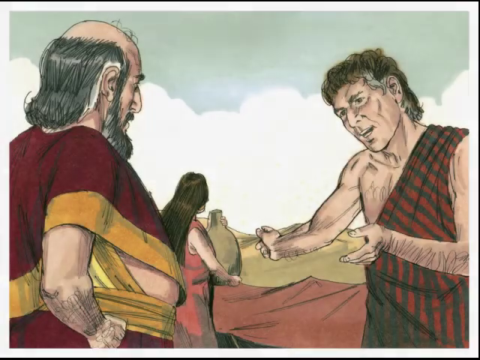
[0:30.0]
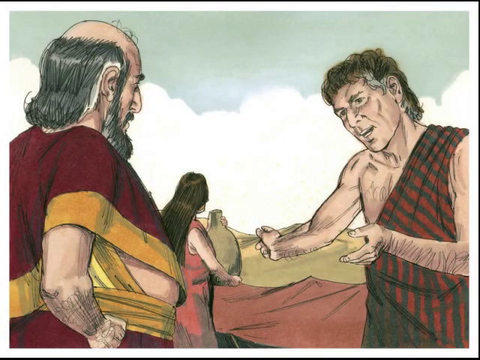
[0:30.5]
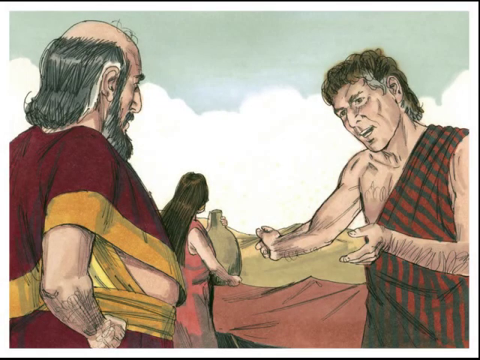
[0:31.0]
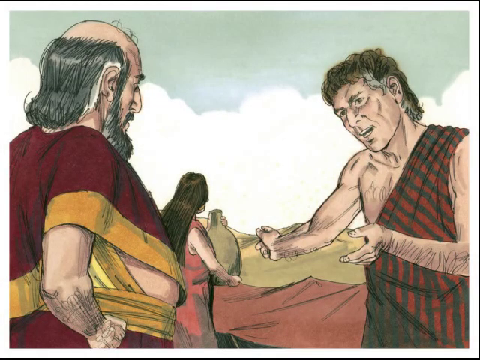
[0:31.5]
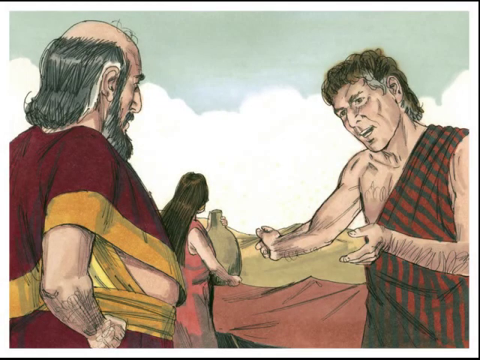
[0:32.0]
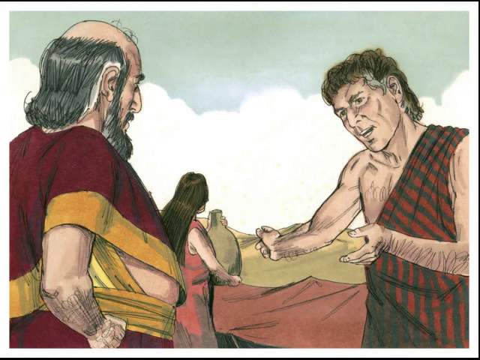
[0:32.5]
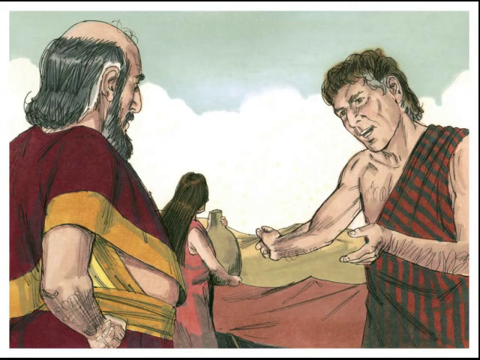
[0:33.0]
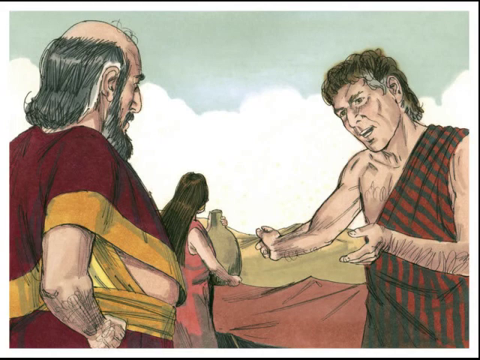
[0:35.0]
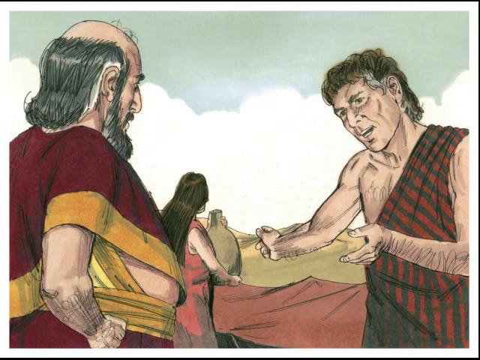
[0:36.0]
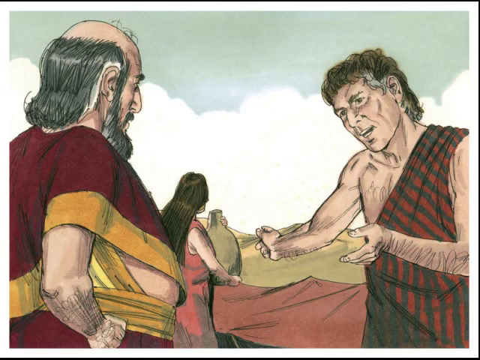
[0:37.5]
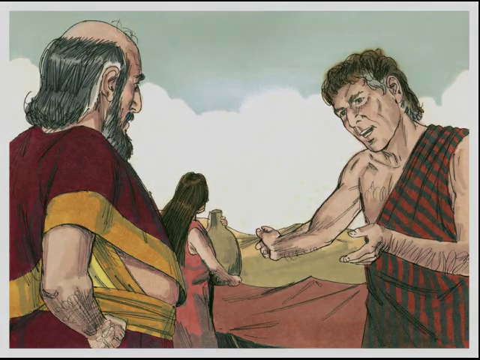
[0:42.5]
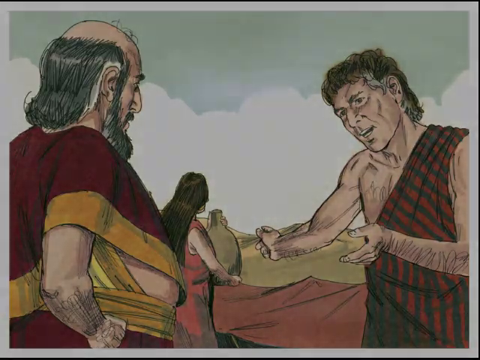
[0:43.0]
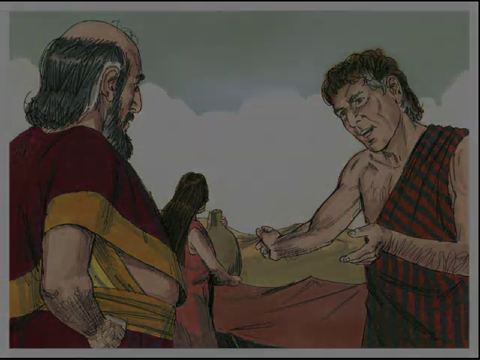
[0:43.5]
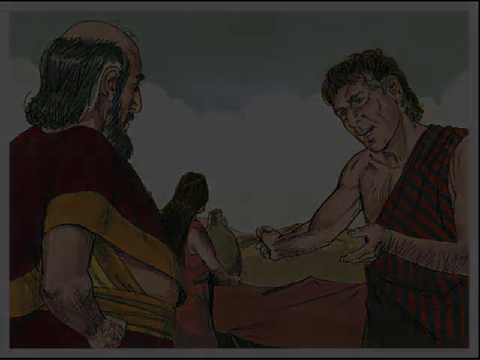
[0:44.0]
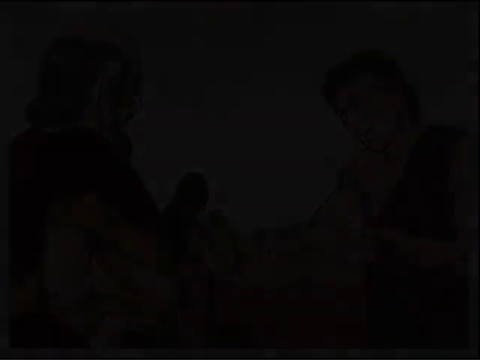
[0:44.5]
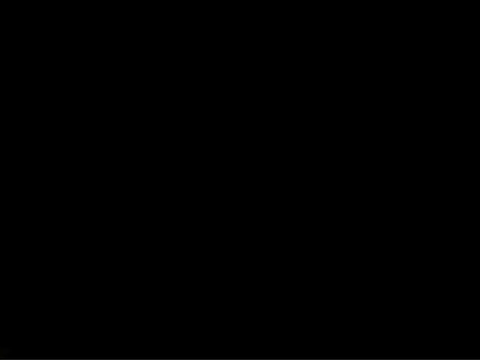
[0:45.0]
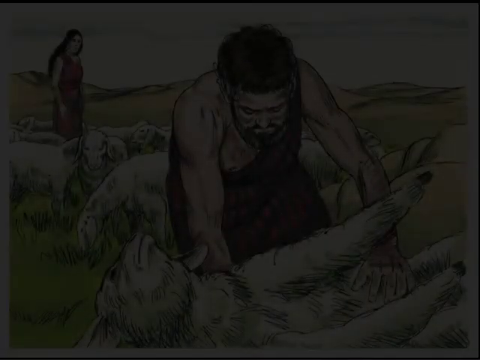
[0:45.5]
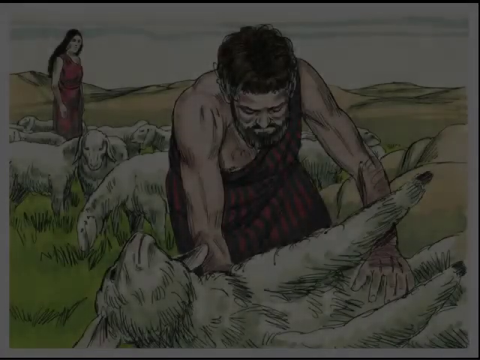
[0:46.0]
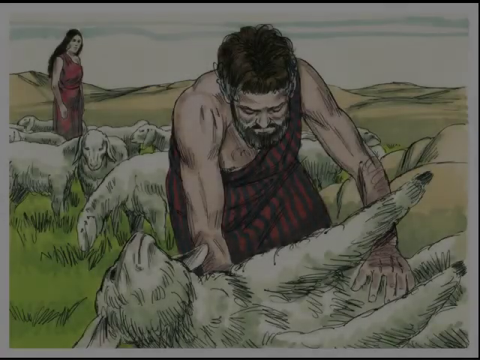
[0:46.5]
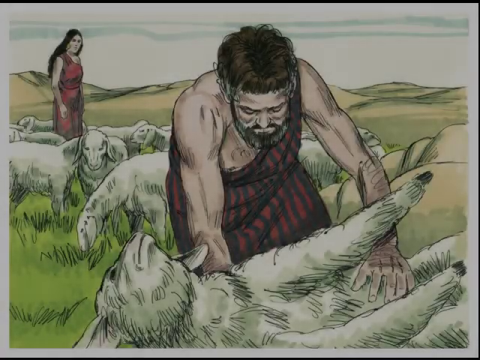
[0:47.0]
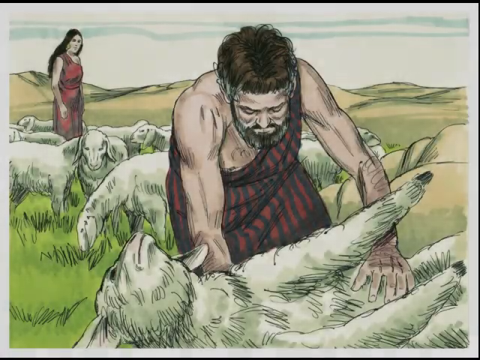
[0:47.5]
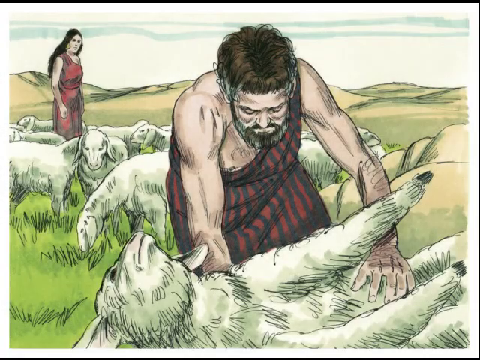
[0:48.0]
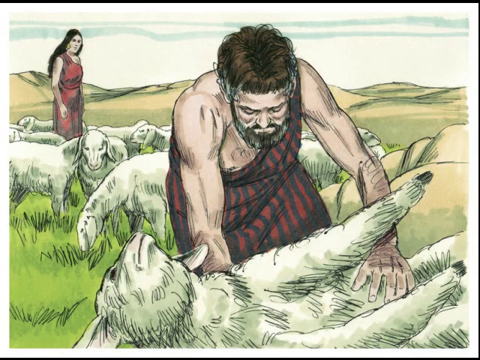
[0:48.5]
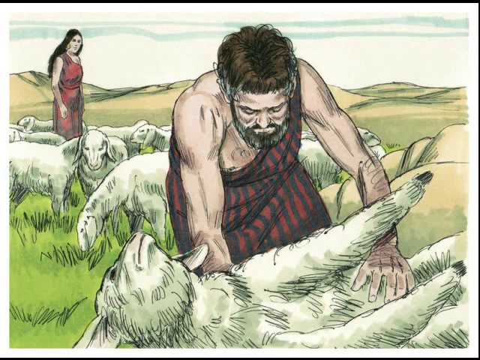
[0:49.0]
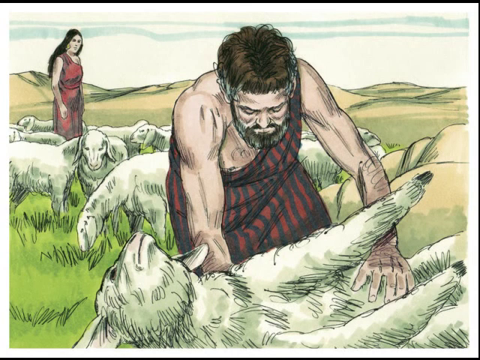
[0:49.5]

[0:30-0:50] A rendering shows the two men seen earlier, now standing outside in a field. The older man is on the left, mostly with his back to the viewer and seen in profile. The younger man, on the right, faces the older man, his face visible at almost full three-quarters. His arms are in front of him with his hands facing each other, his head tilted, and the muscles in his arms, neck and face tense; he gazes directly into the older man's eyes and seems to be trying to persuade him of something. The older man looks down rather than at the younger man, his posture suggesting he is listening closely and considering what is being said.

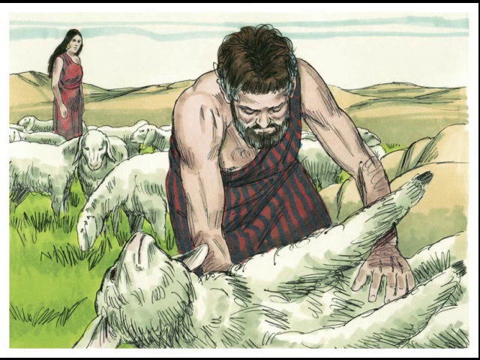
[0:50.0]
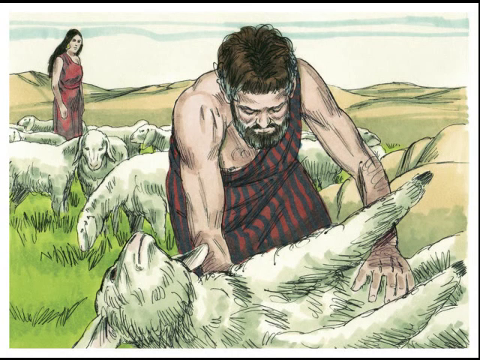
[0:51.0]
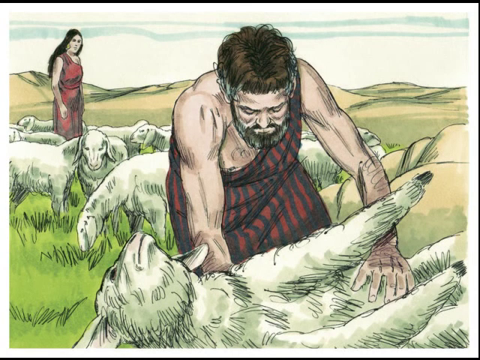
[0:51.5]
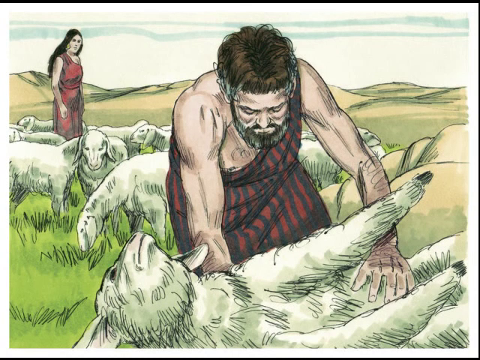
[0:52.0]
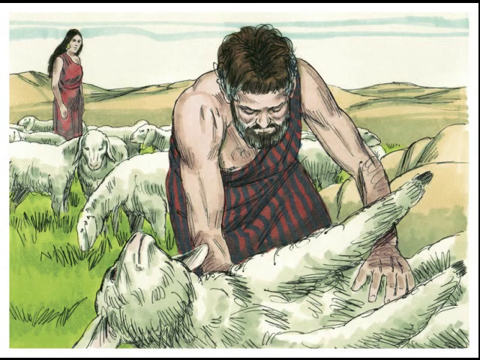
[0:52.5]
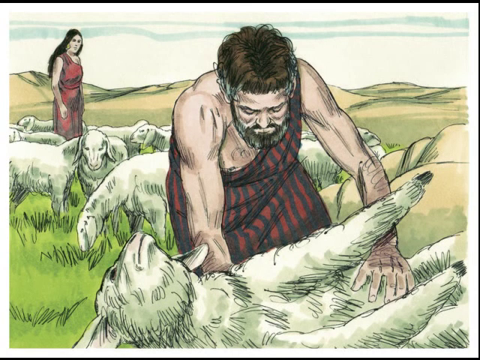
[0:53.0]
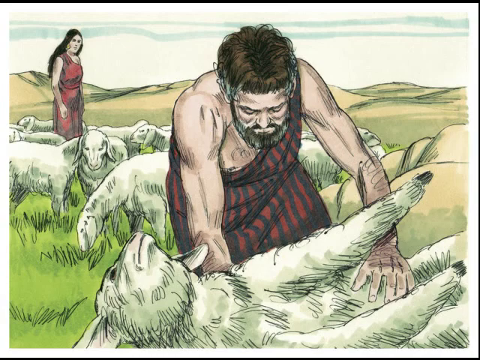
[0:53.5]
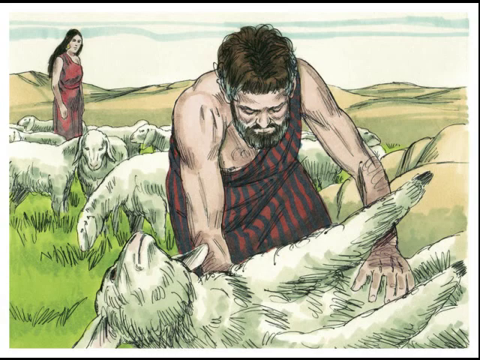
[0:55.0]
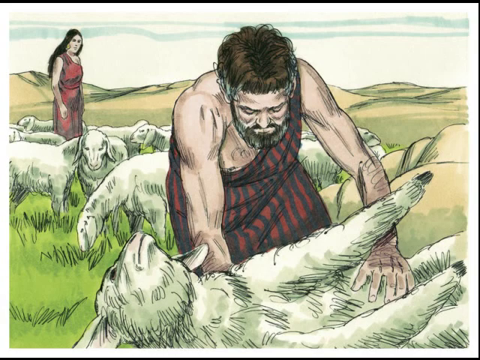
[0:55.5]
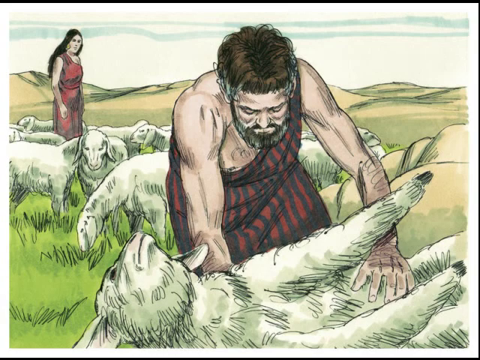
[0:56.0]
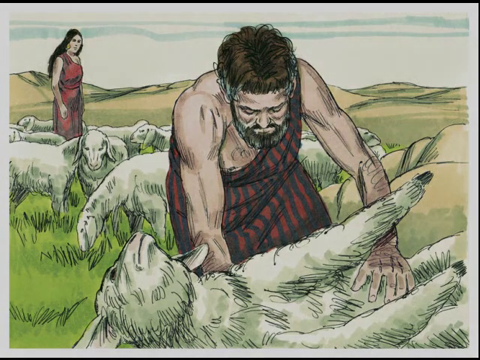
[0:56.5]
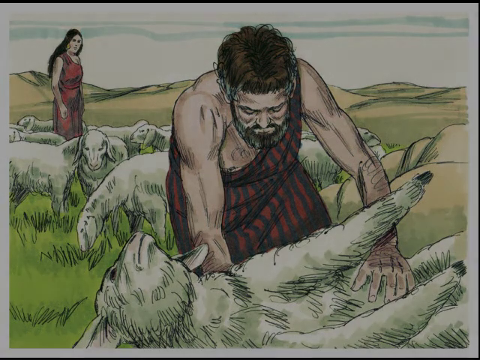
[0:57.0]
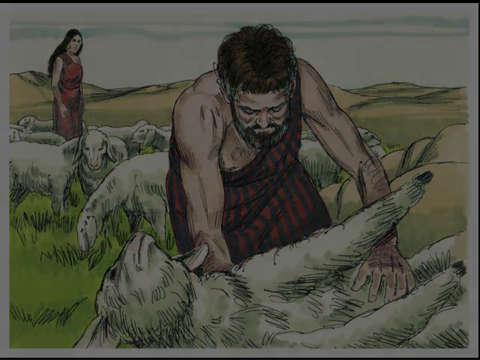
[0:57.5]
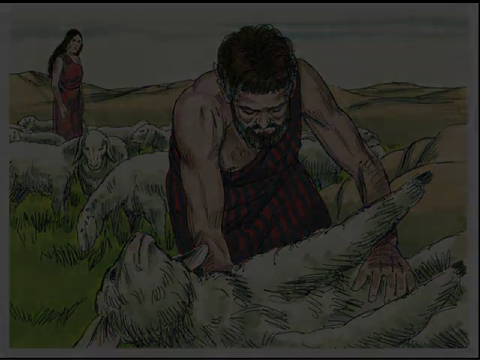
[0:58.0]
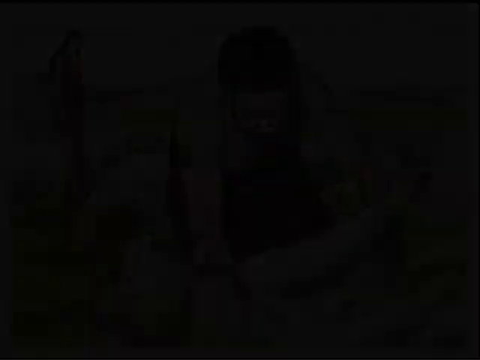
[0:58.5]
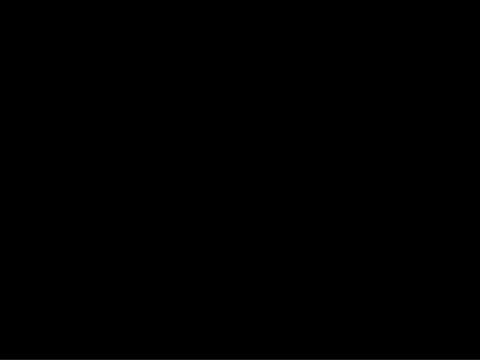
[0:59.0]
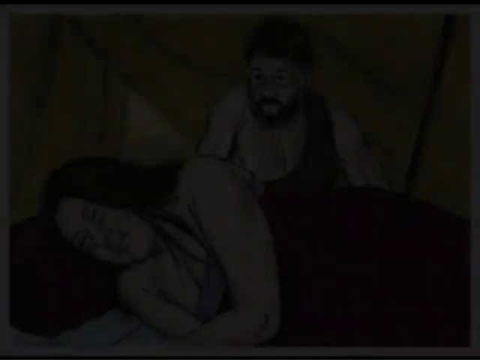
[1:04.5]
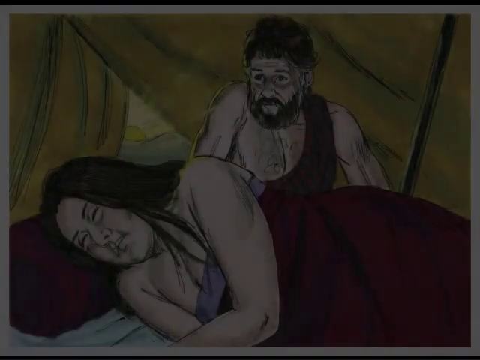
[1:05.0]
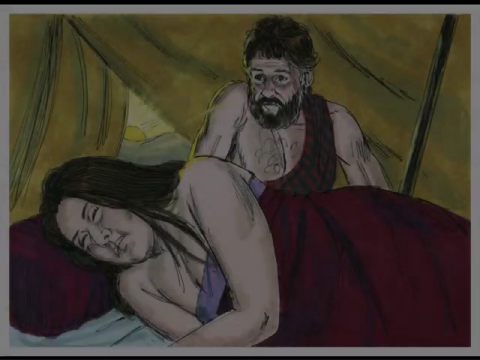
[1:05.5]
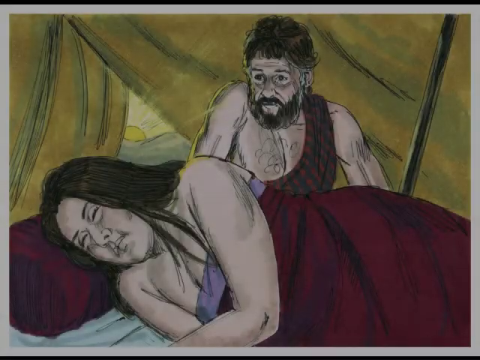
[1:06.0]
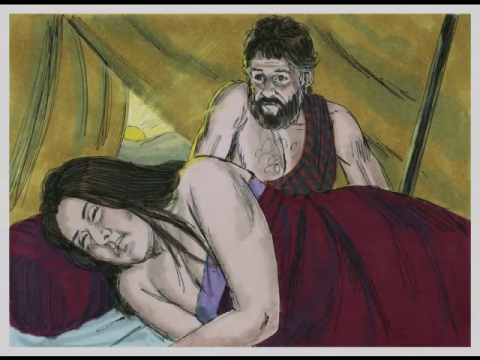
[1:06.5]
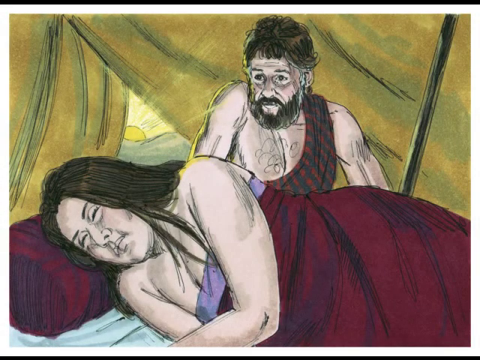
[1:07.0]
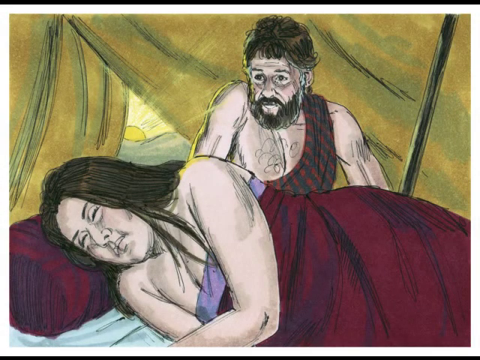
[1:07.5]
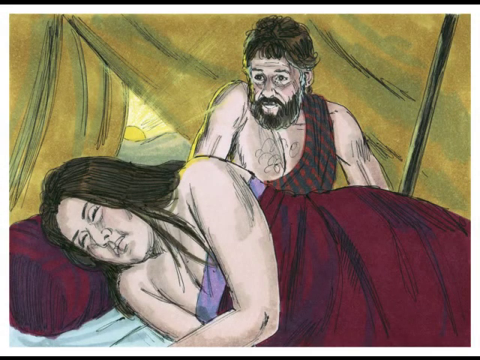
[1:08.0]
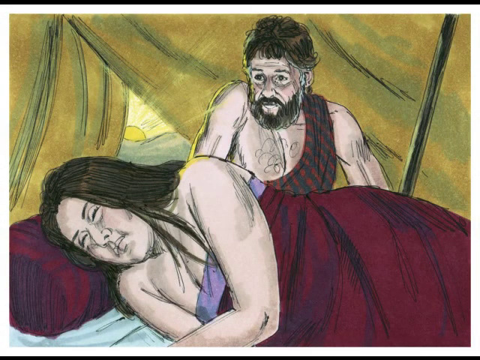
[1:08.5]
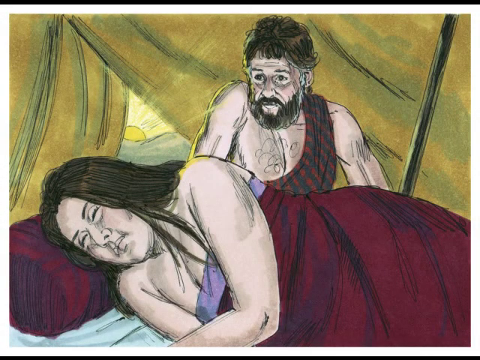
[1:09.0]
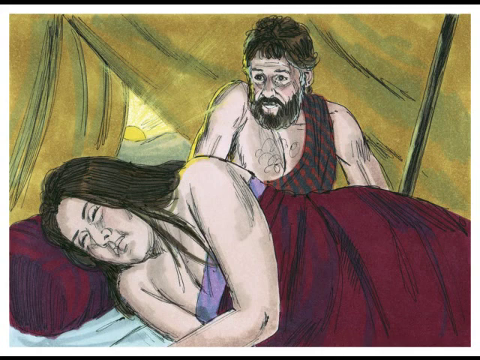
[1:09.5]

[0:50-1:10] A rendering set in a field shows a man in the foreground kneeling and bent over with his hands on a lamb lying on its left side. The lamb appears to have been injured. Behind the man and the lamb are many more sheep, on their feet and grazing or generally checking out what is happening. At the back of the herd is a woman in a long sleeveless dress with long dark hair, looking at the man. Behind her are grassless hills. The man has a beard and short but shaggy hair; he seems concerned about the lamb, frowning and looking down at it with a sad, serious expression, the muscles in his arms and shoulders very tight.